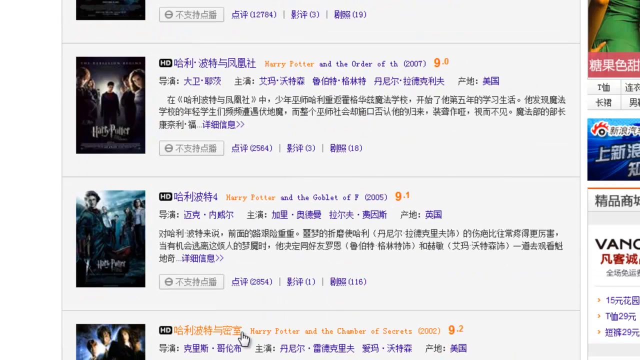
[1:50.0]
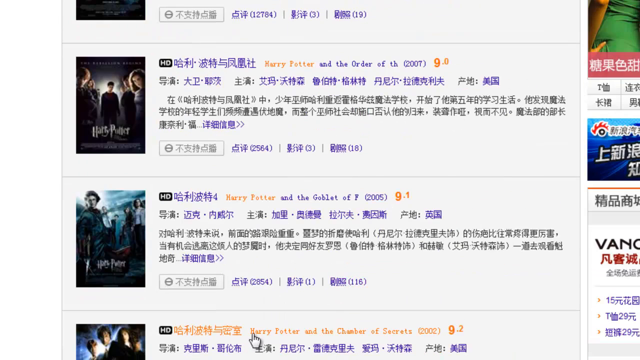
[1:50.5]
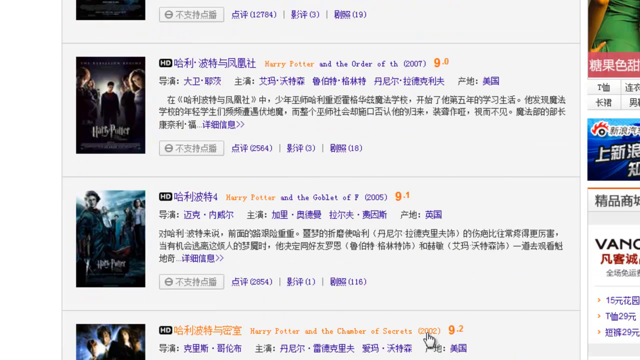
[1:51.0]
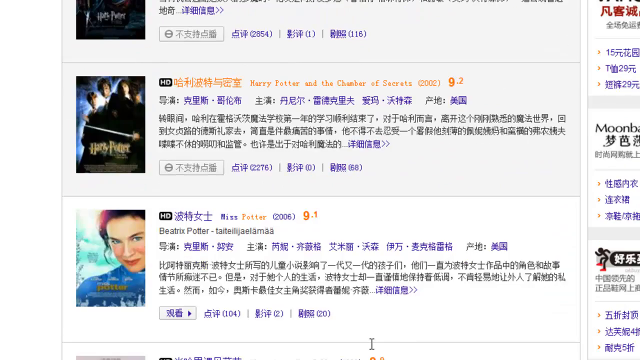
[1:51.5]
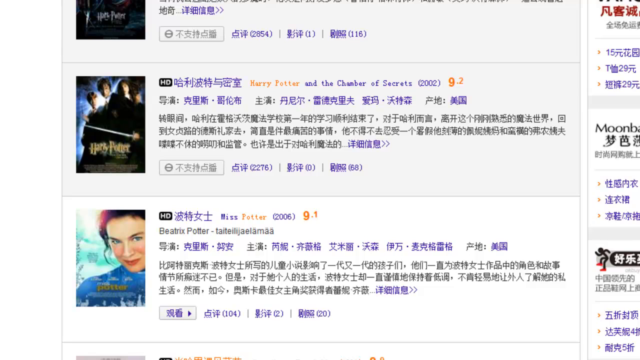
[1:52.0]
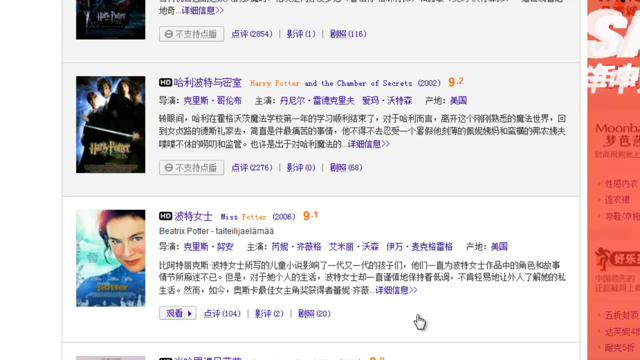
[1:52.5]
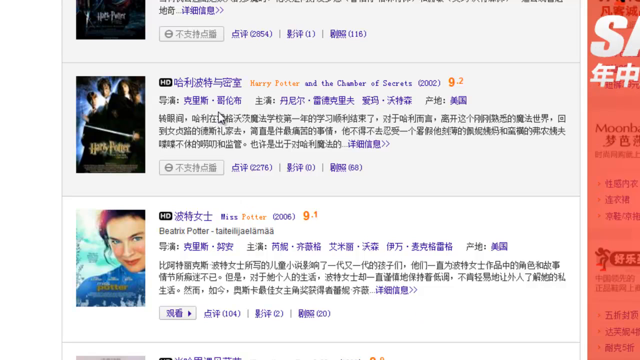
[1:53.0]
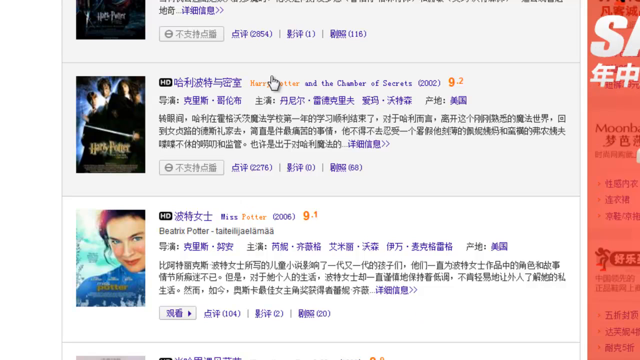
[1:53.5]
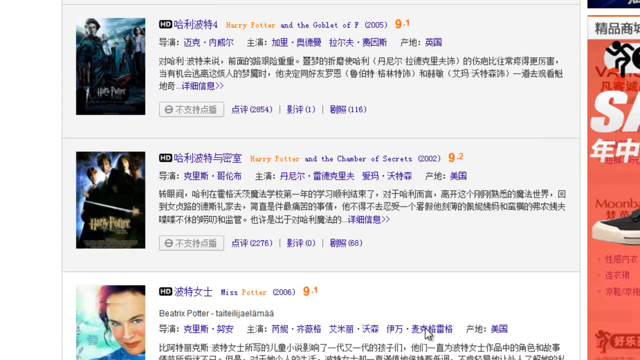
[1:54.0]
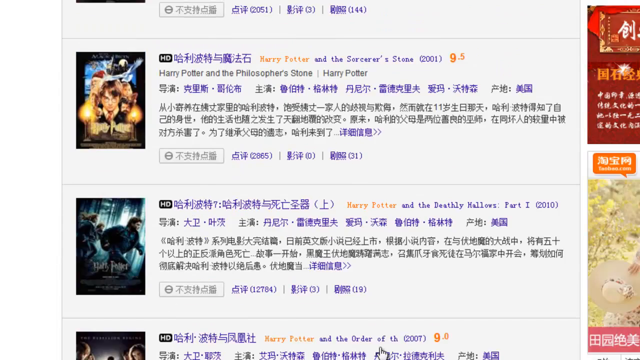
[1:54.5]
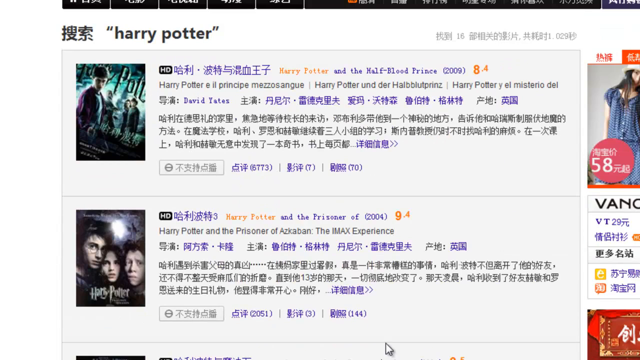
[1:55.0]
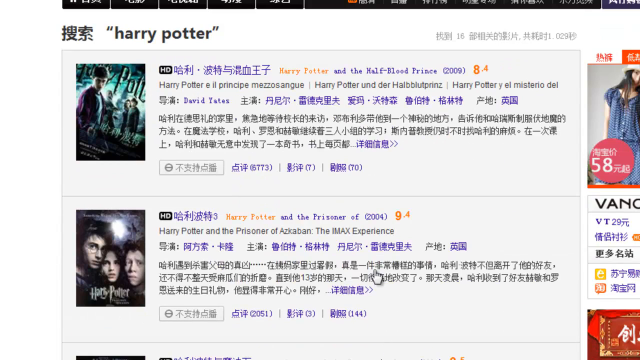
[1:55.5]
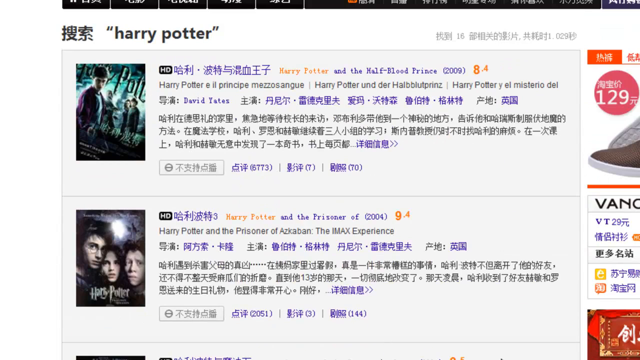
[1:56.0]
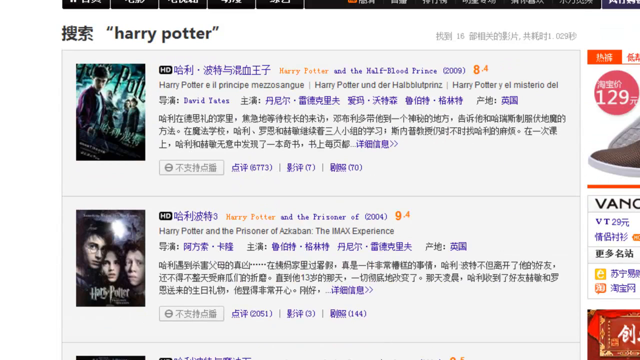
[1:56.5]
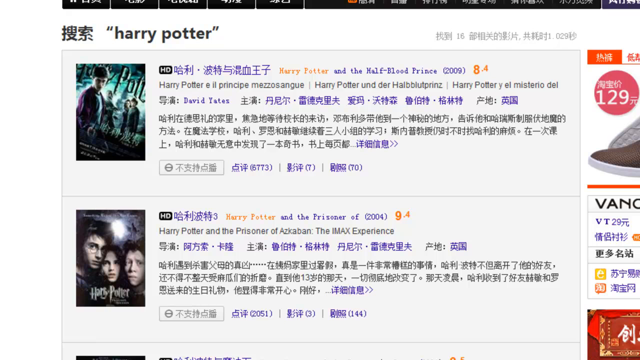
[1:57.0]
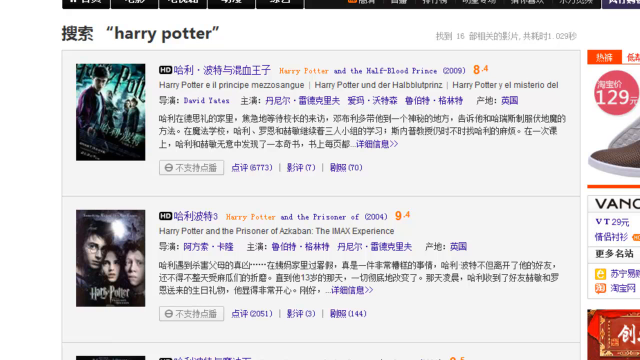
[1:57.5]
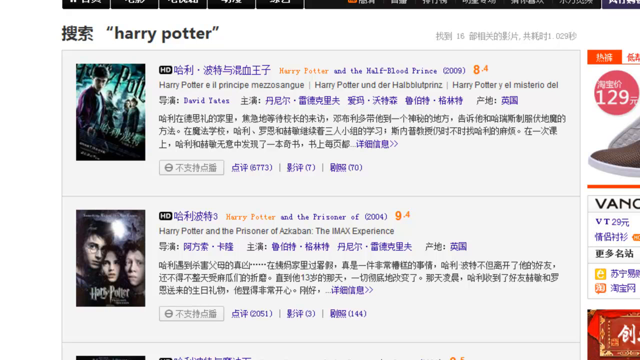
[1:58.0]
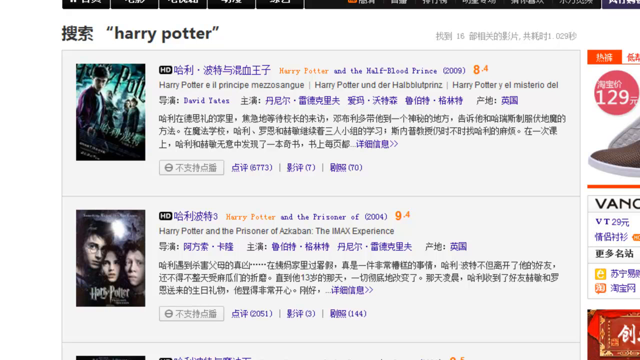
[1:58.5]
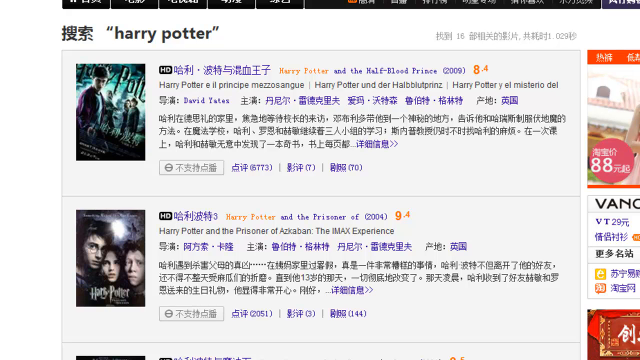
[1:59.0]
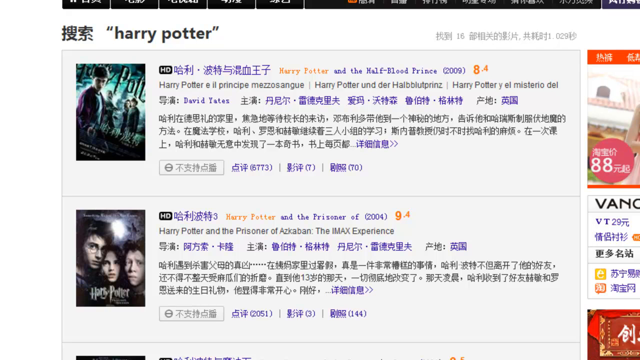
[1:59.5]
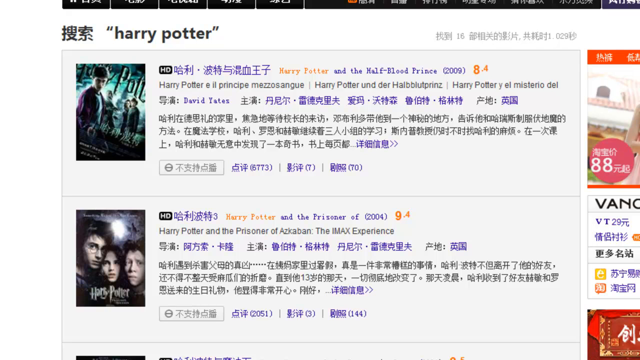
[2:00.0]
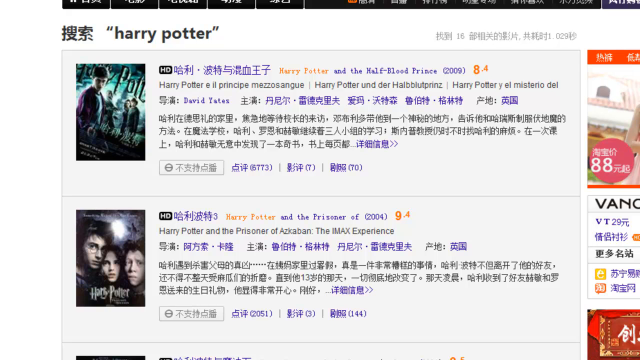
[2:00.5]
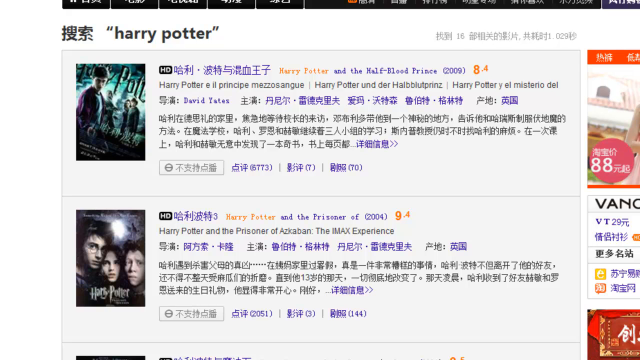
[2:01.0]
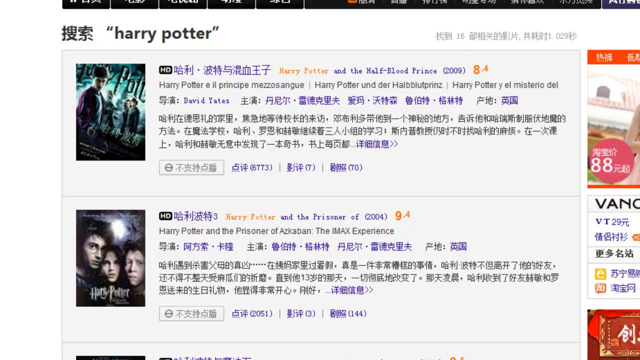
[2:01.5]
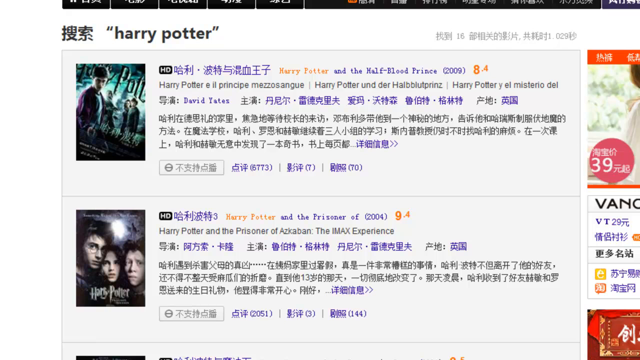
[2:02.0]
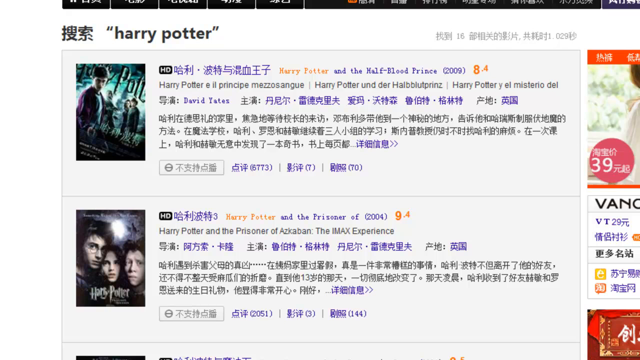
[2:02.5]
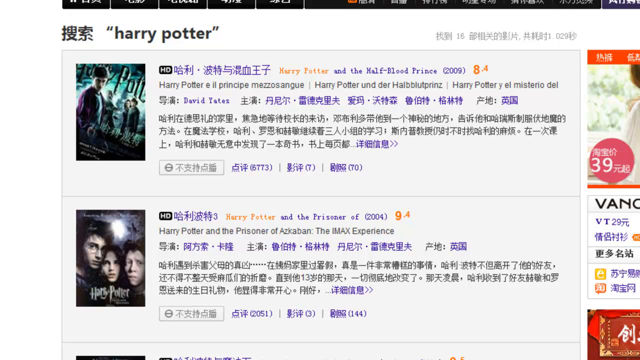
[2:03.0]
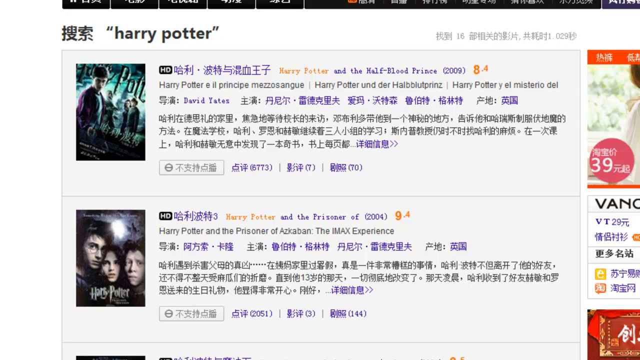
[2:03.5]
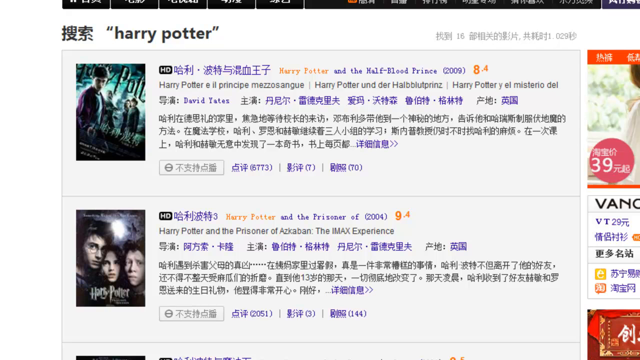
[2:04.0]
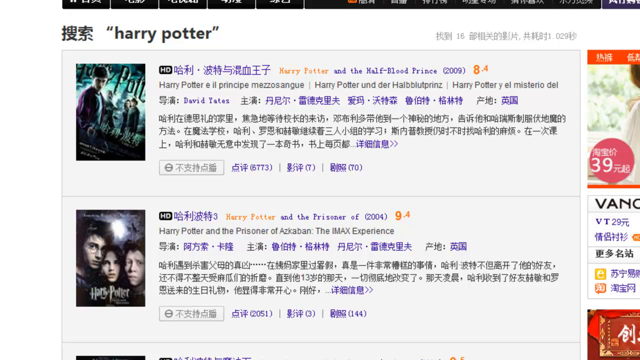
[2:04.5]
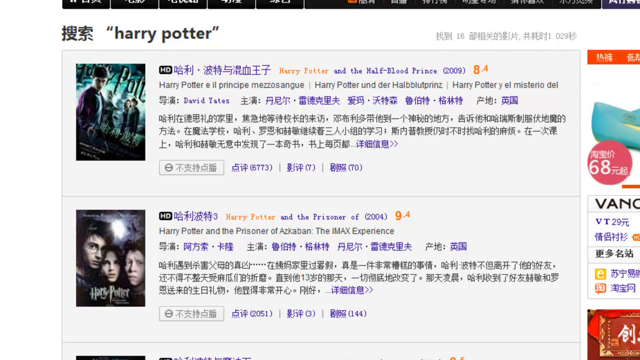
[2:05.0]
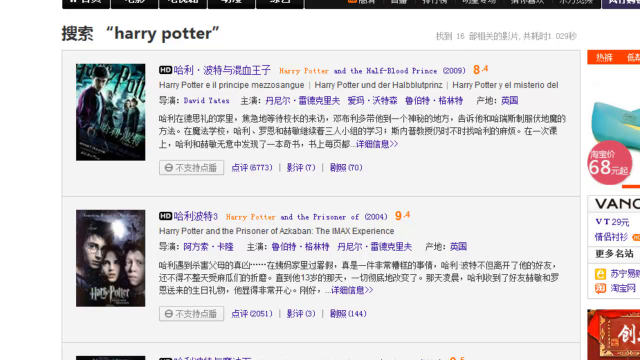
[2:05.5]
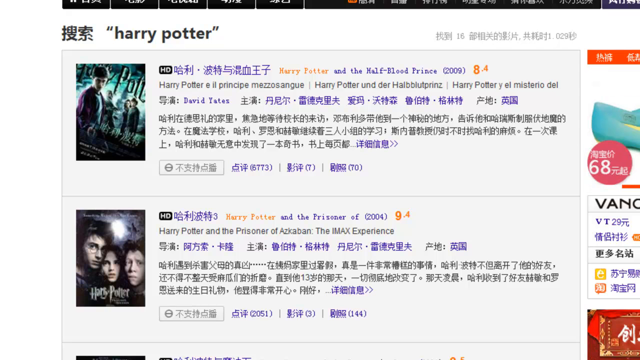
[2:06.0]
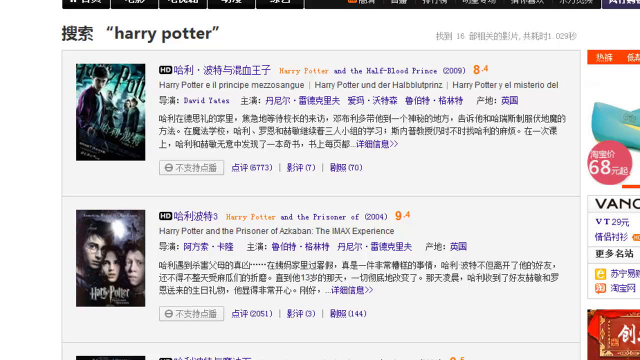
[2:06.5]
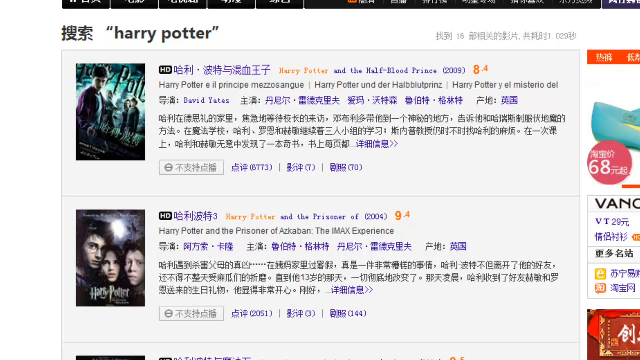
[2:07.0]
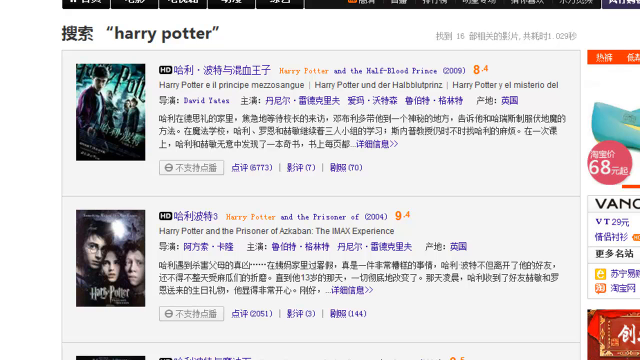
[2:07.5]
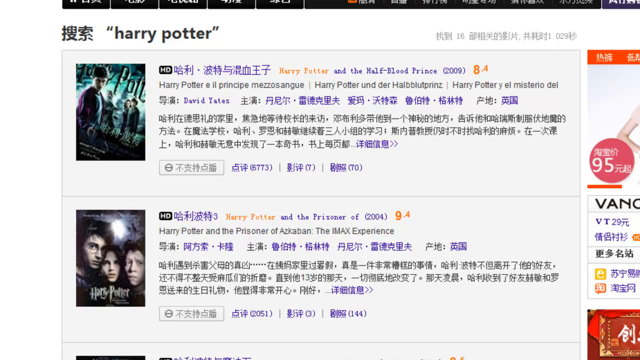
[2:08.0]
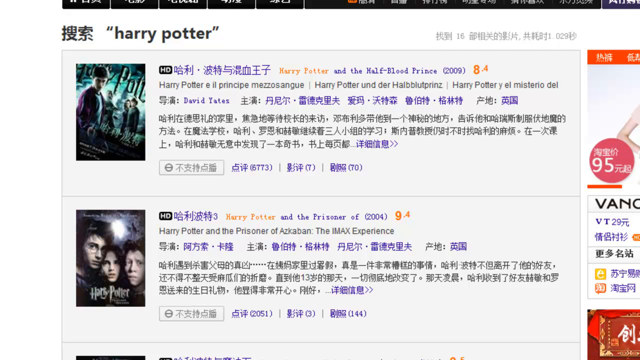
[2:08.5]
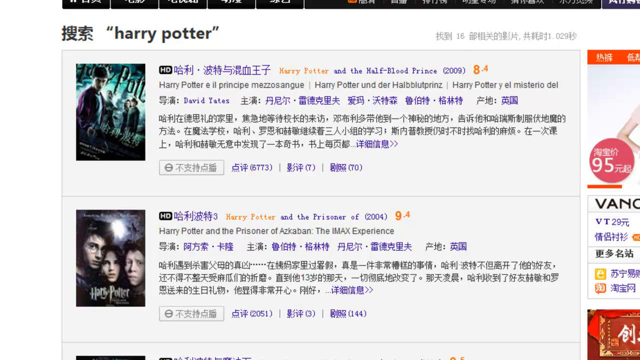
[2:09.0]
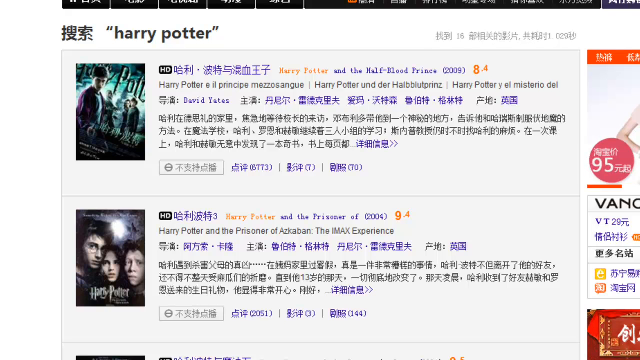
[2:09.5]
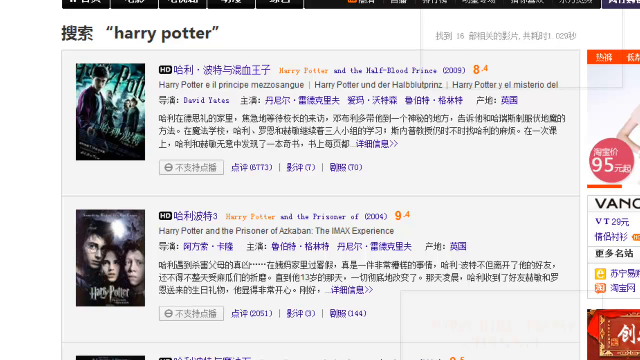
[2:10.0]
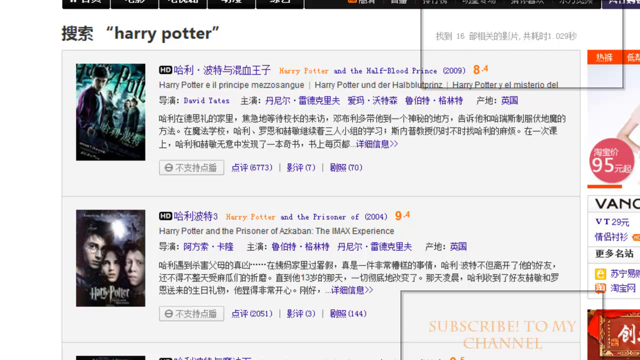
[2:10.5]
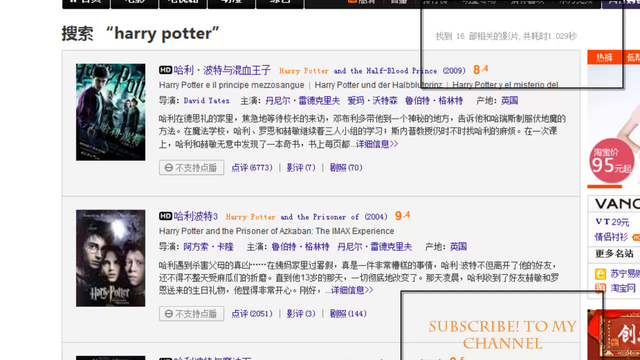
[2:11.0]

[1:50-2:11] A list forming a directory of Harry Potter sources is shown, from which different download sources can be chosen. The website is in an Asian language, and the language can be changed to English or Chinese. A toggle button for watch and library and a radio button are shown, and the top right corner has features for customizing downloads, including changing the language from Chinese to English. At the bottom of the website is a log of all downloads.